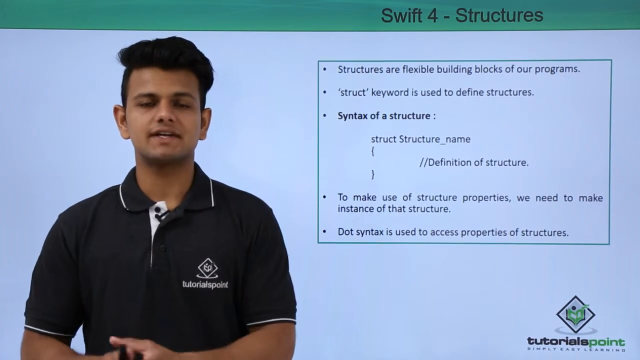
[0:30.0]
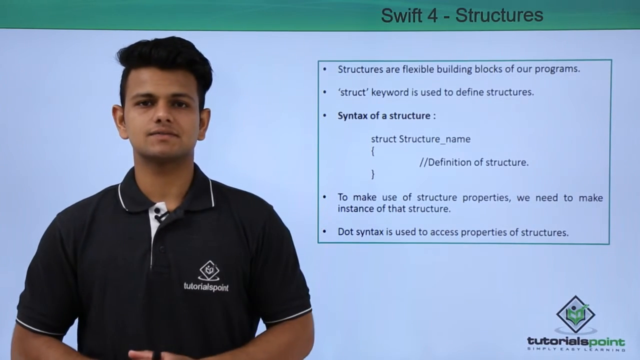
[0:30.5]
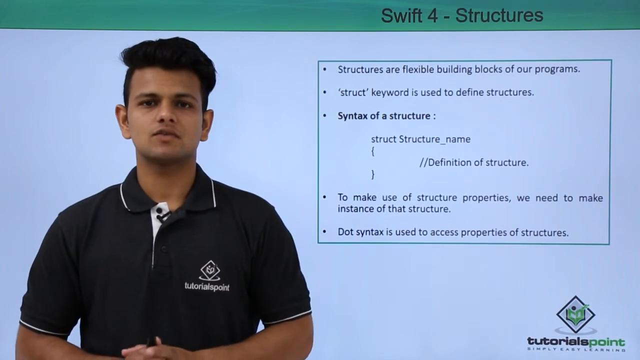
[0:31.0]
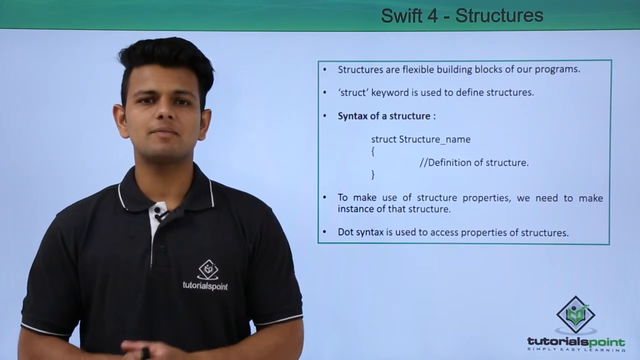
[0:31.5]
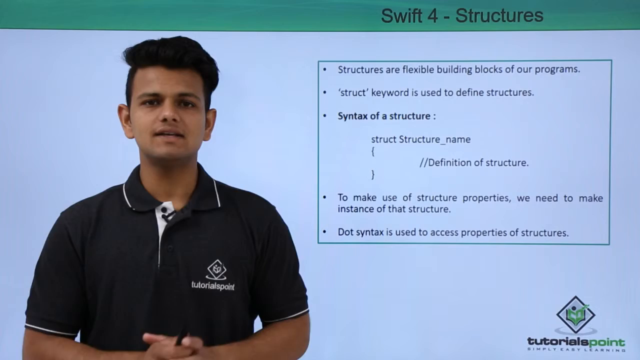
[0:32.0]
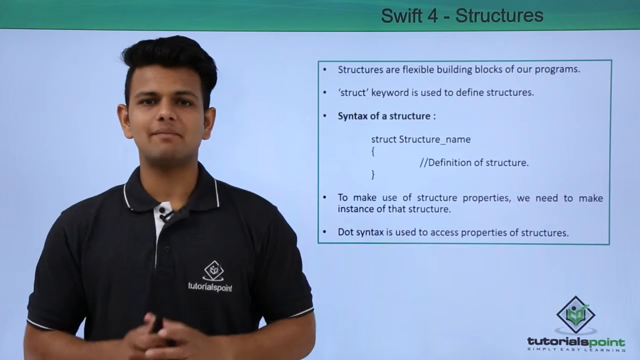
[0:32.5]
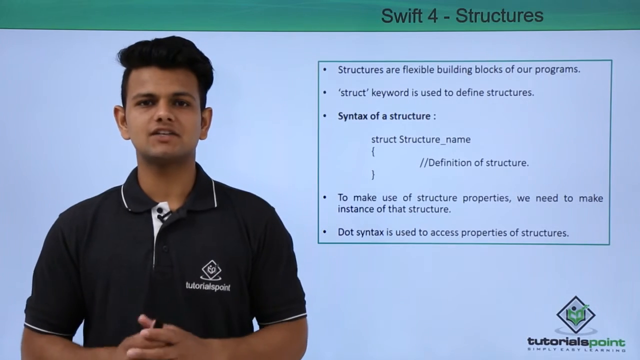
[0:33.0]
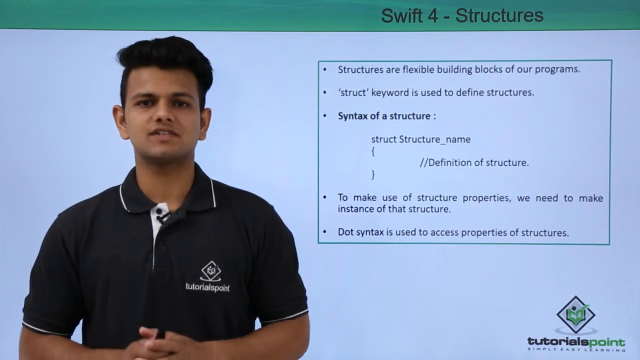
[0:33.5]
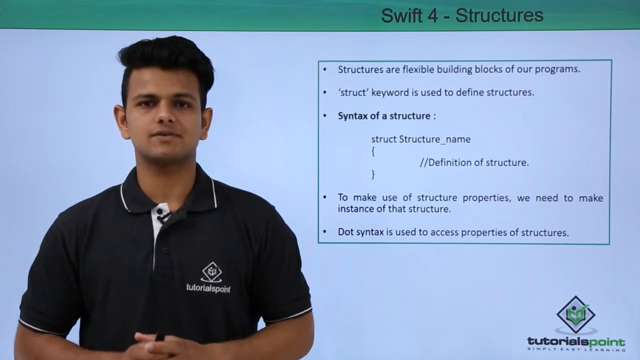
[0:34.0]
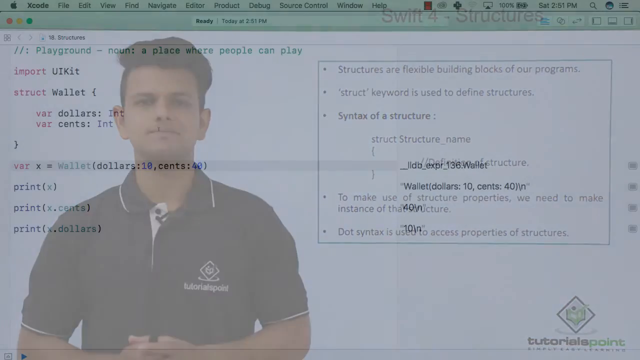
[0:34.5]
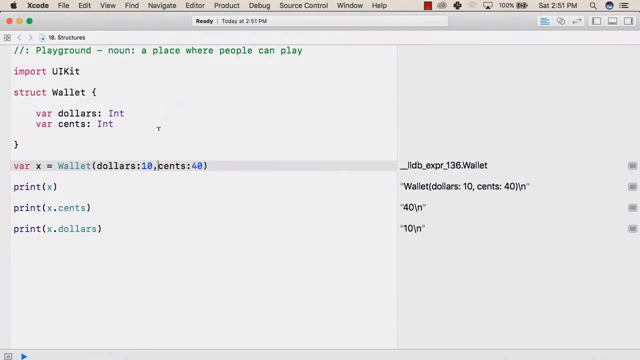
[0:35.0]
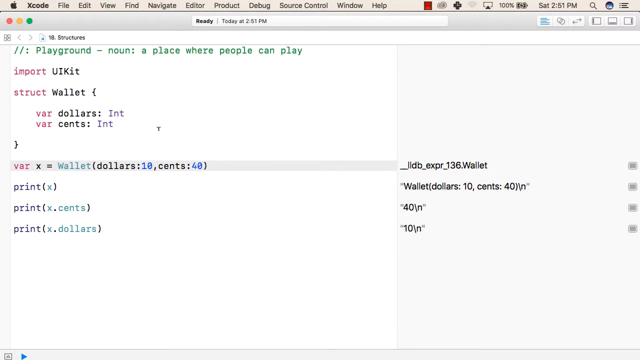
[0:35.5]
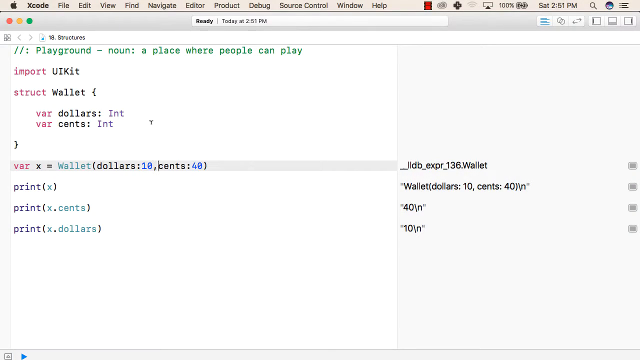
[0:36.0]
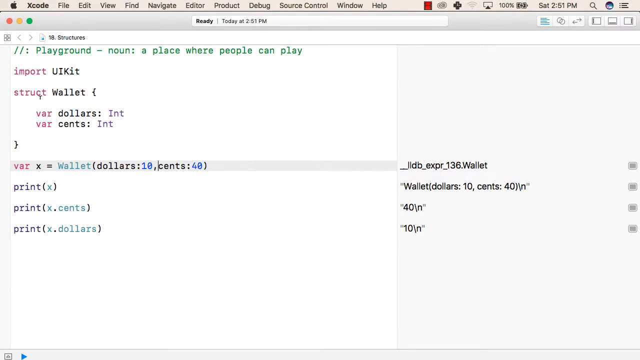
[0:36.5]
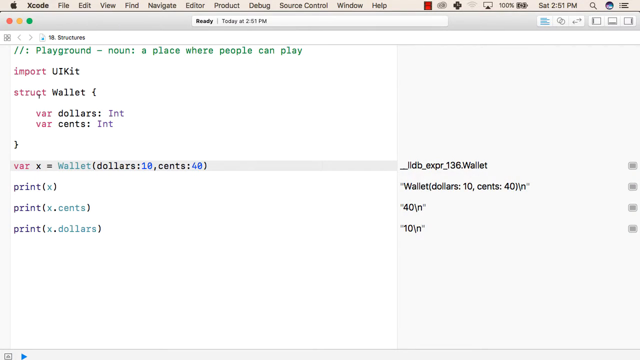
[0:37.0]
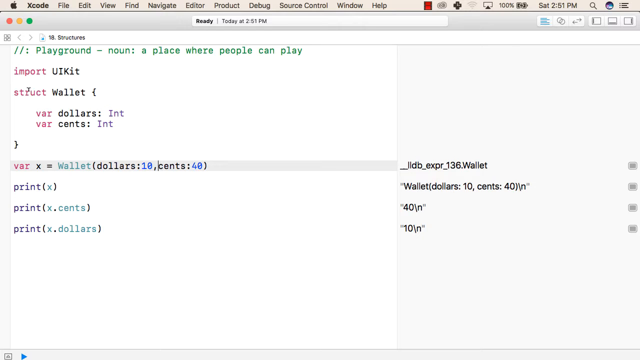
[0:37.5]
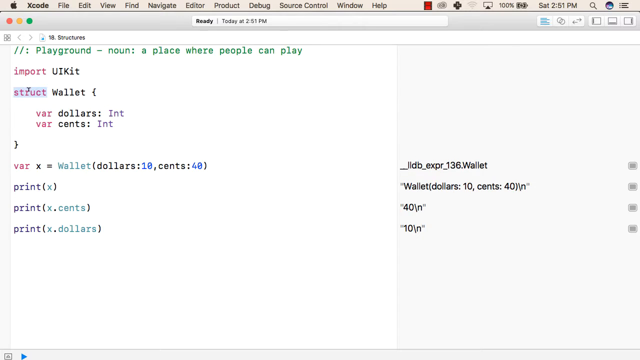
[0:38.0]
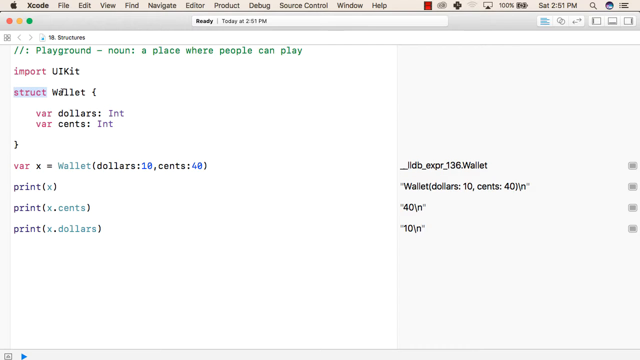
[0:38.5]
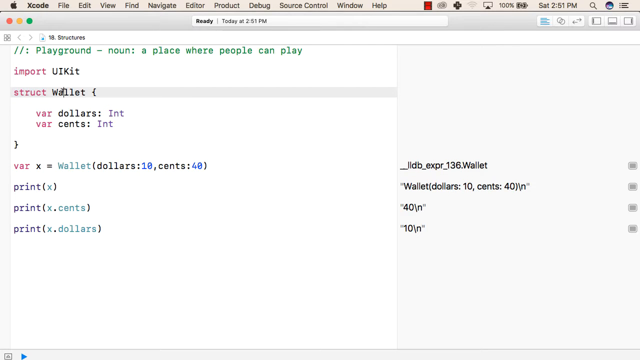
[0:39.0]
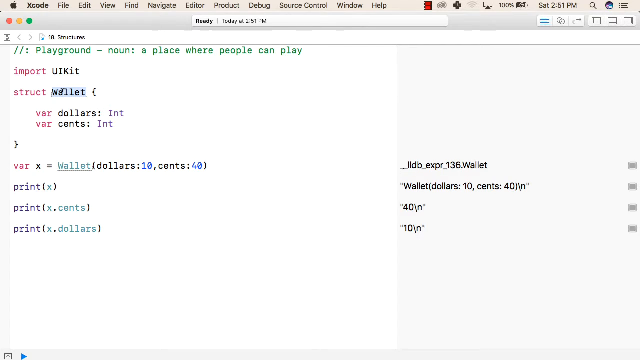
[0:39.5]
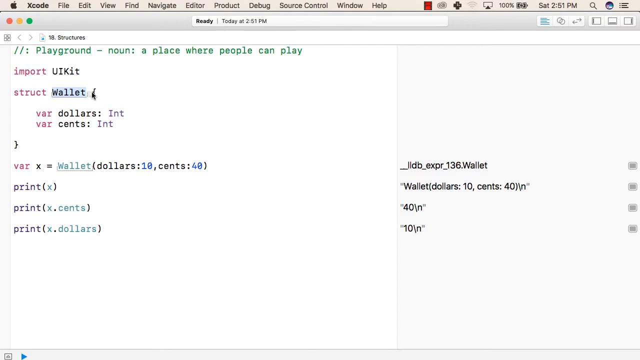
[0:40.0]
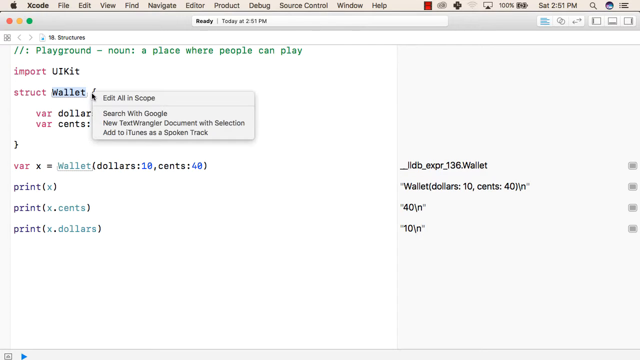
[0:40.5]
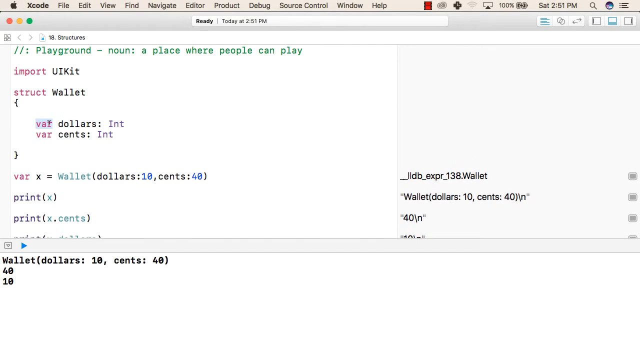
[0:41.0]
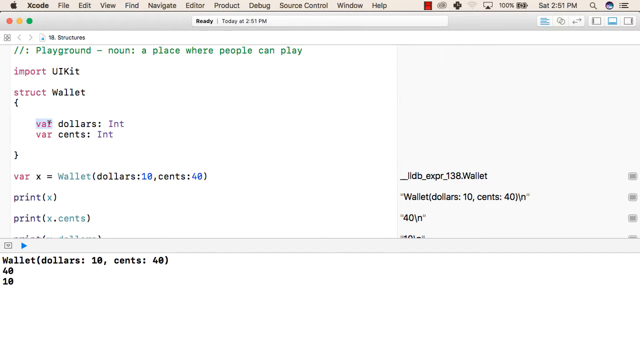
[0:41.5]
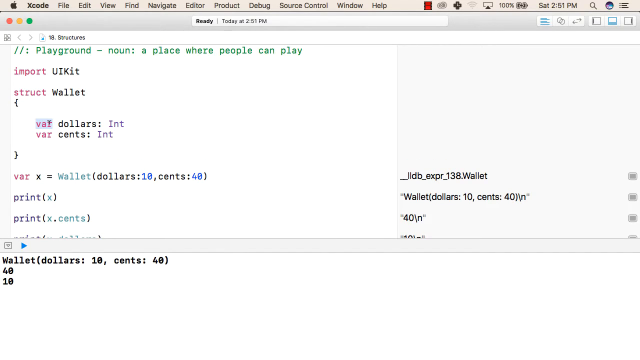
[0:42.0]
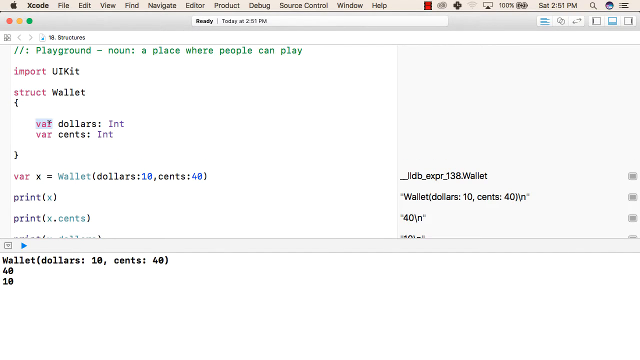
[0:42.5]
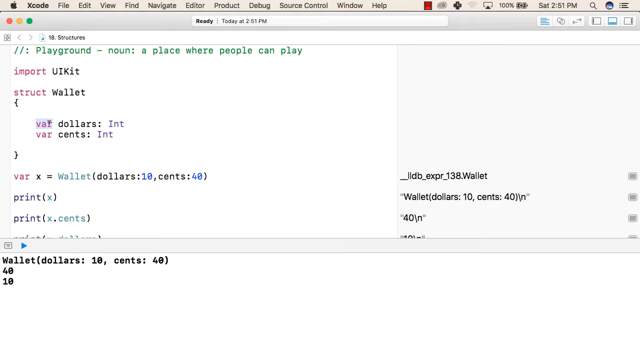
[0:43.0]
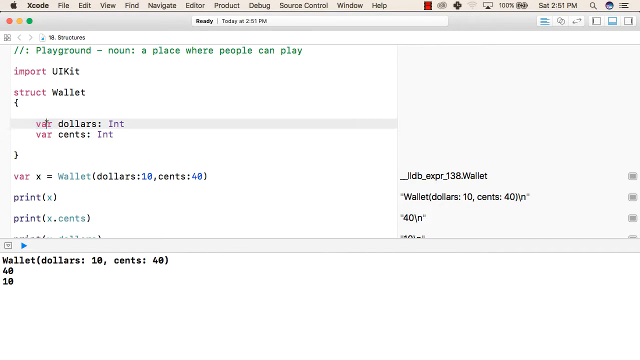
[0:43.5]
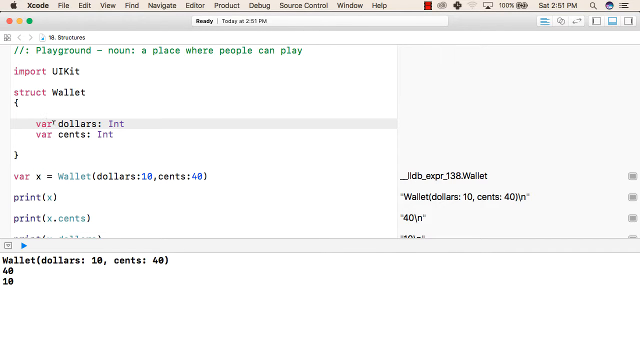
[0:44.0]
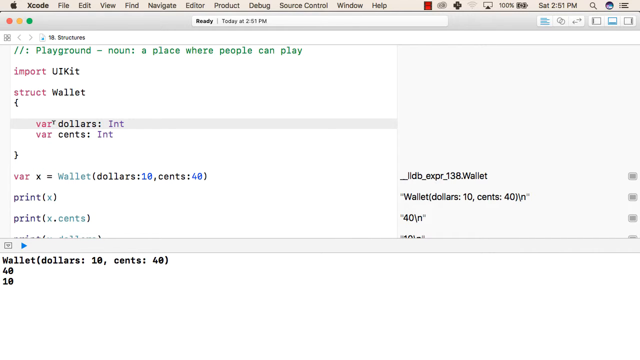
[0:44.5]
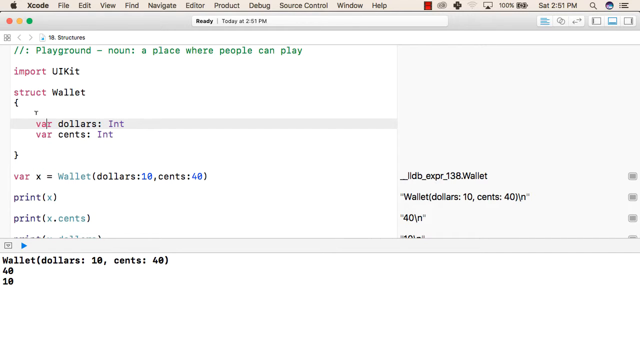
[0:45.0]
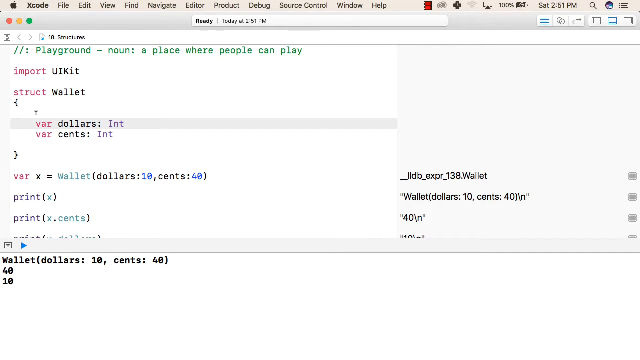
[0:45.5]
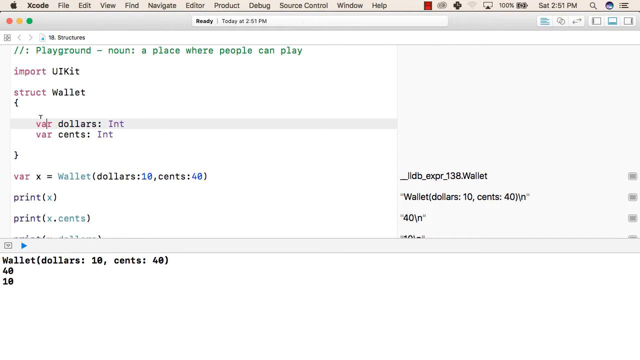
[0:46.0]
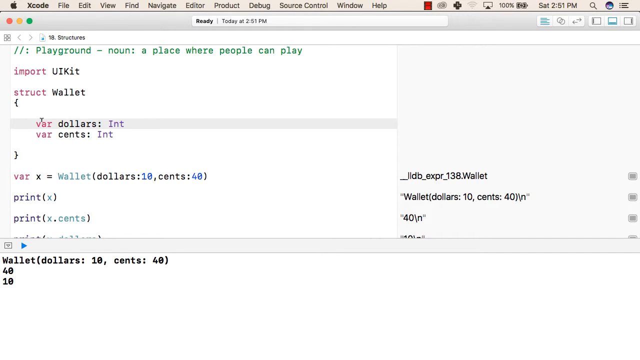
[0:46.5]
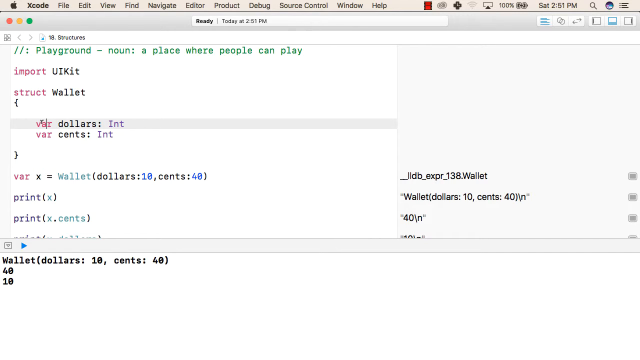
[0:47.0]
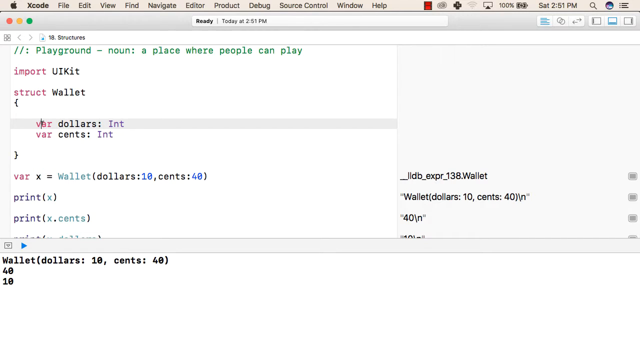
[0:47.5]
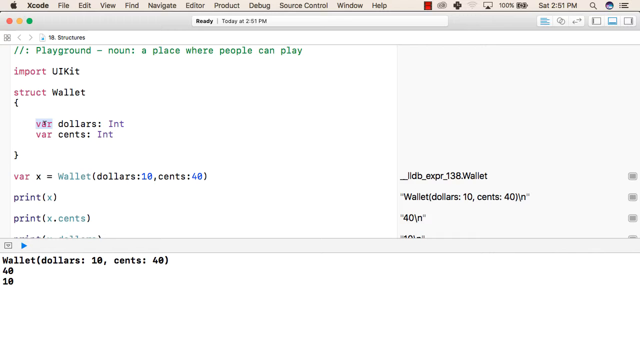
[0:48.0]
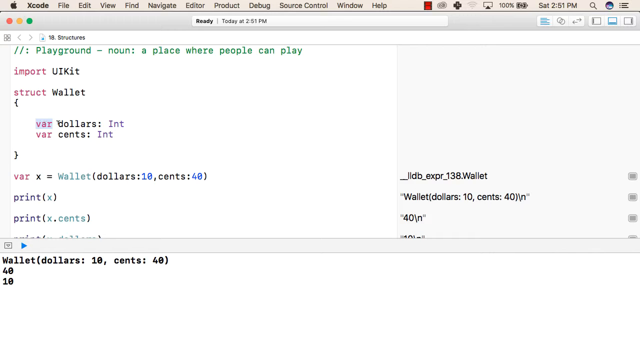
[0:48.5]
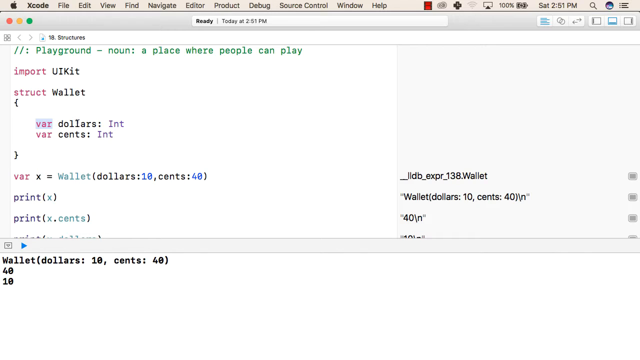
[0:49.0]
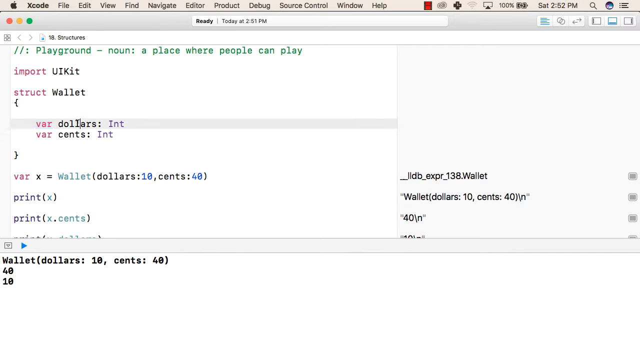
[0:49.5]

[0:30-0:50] A brown-skinned man with dark hair, wearing a black t-shirt with white outlines, talks to the camera from the left side of the screen. Behind him, on the right side of the screen, is what looks like a screen with a group of text on it, written as a bulleted list with one item appearing like code. At the top of the screen is the text "Swift 4 - Structures" in black on a green background. The video then shows what looks like code on the left side of the screen, with the text "Xcode" at the top left beside an Apple logo. The rest of the top section shows navigation sections for the page, and the web address bar includes the text "Structures". The code on the left is modified as a cursor appears on the screen.